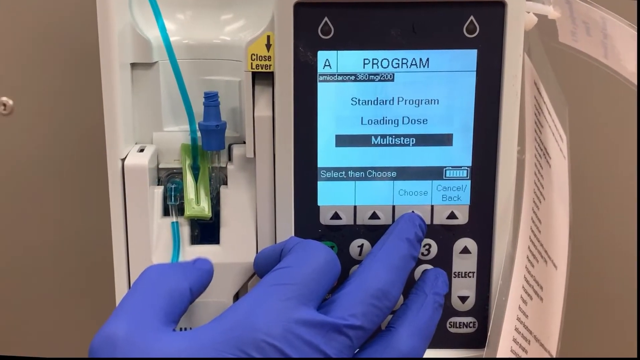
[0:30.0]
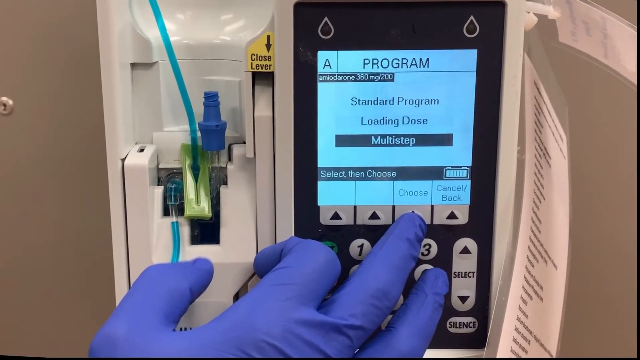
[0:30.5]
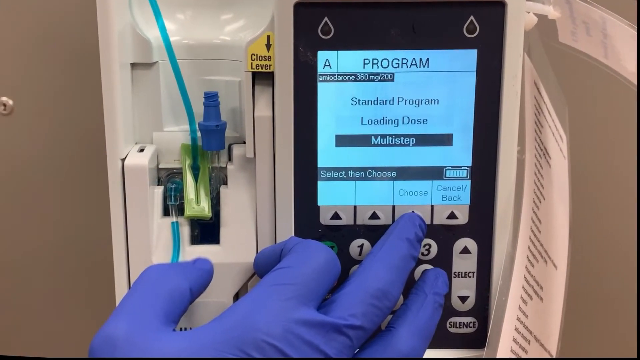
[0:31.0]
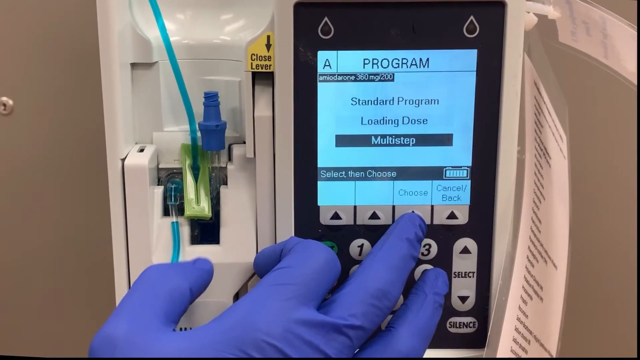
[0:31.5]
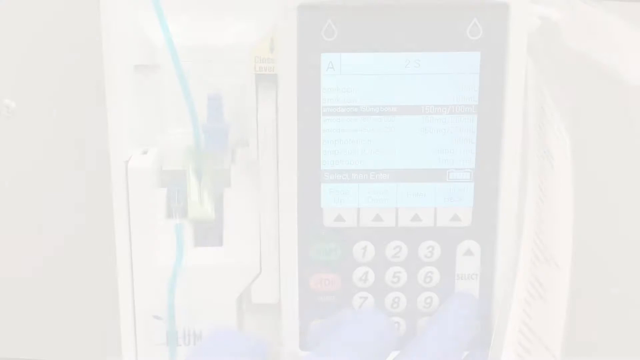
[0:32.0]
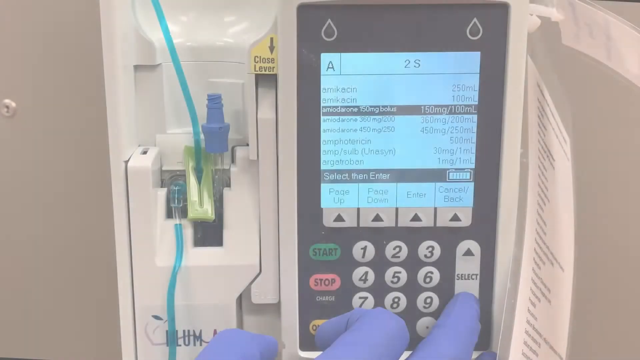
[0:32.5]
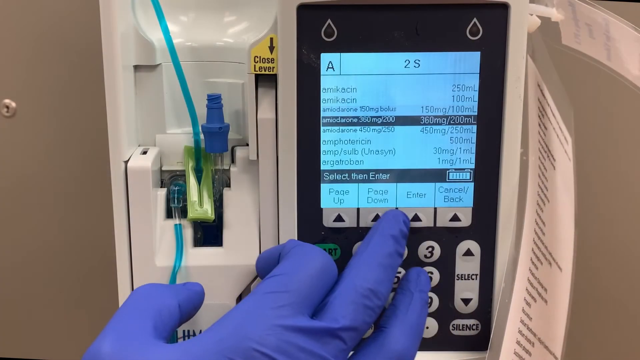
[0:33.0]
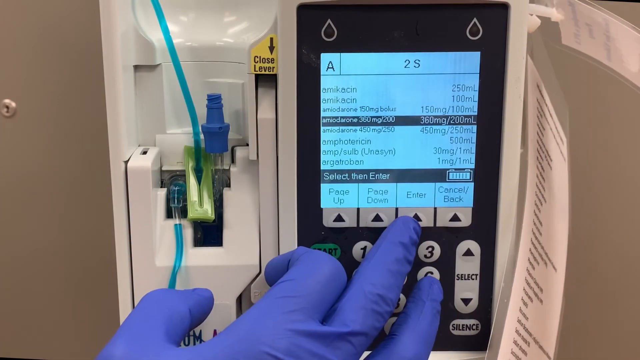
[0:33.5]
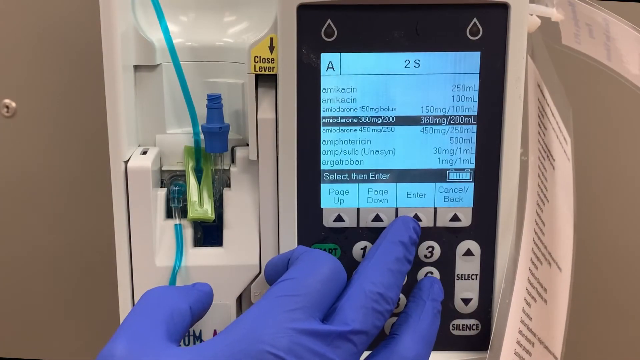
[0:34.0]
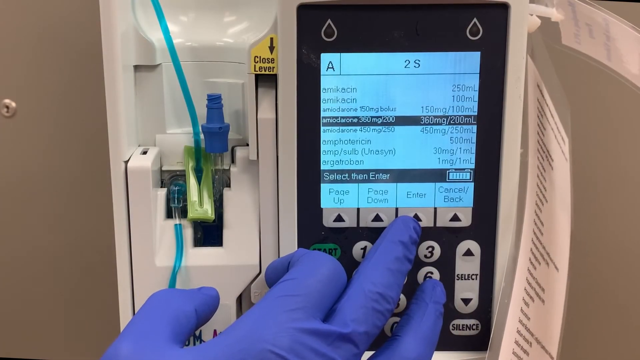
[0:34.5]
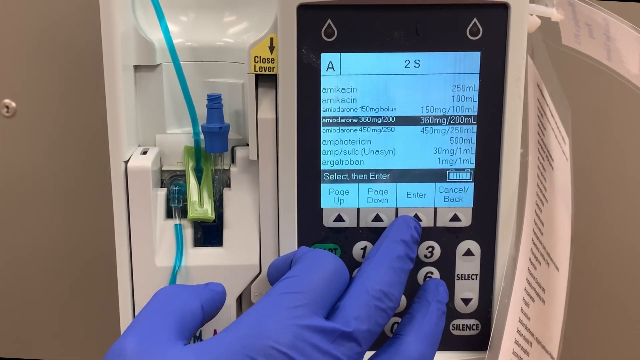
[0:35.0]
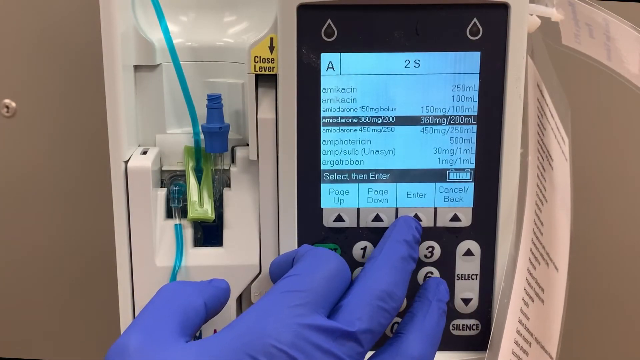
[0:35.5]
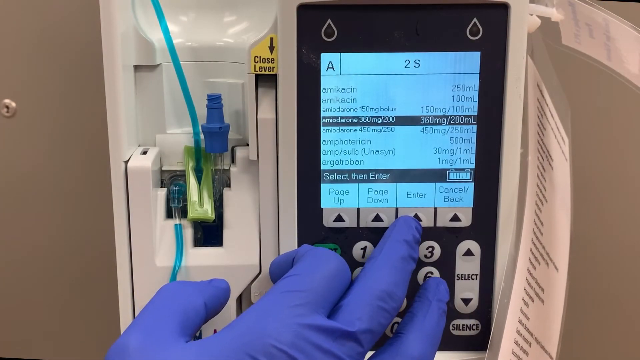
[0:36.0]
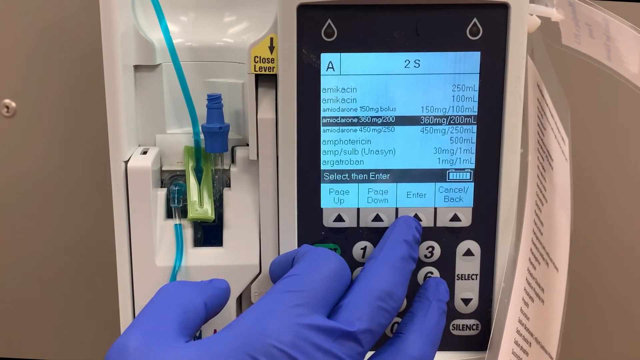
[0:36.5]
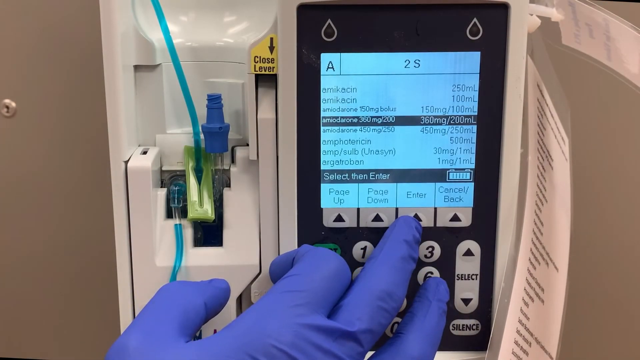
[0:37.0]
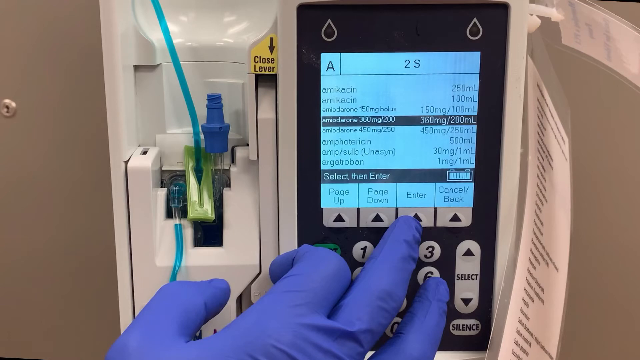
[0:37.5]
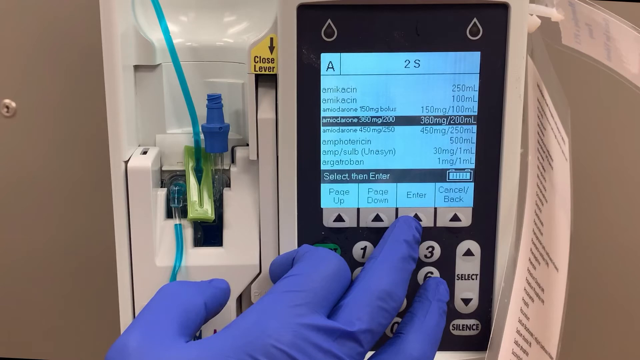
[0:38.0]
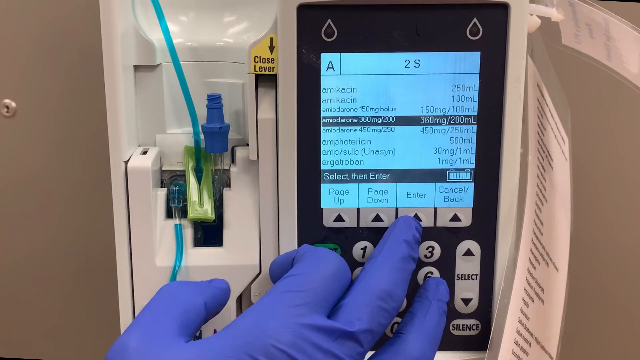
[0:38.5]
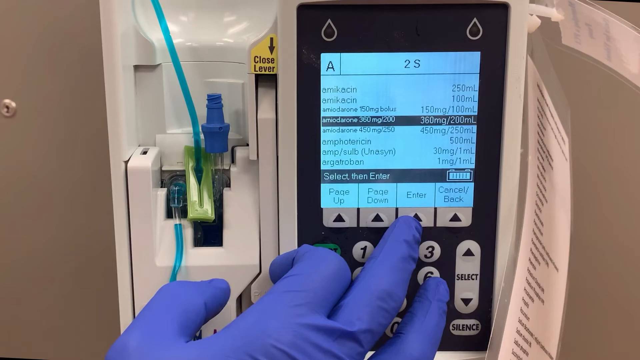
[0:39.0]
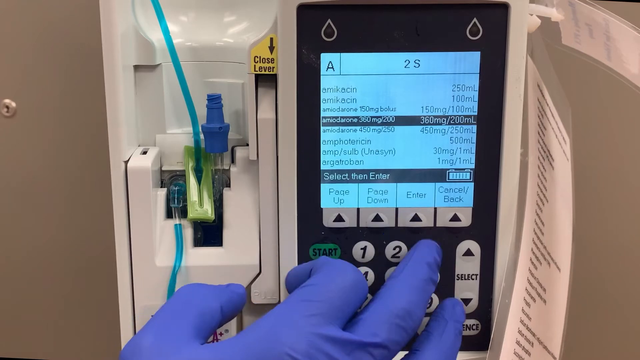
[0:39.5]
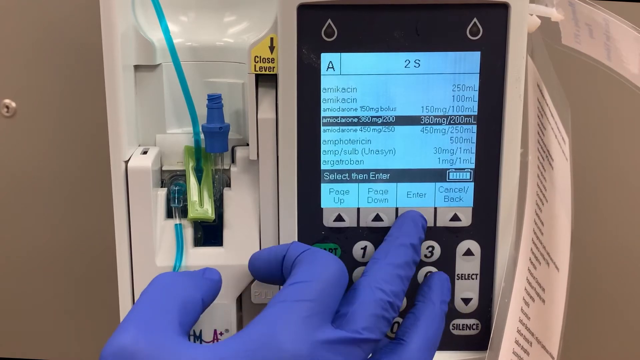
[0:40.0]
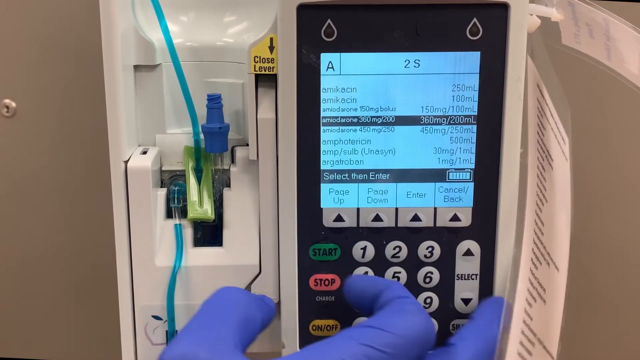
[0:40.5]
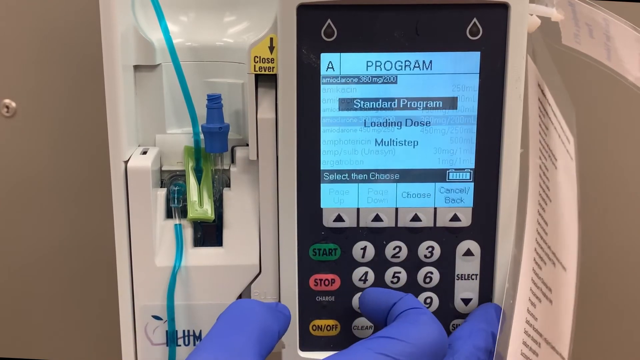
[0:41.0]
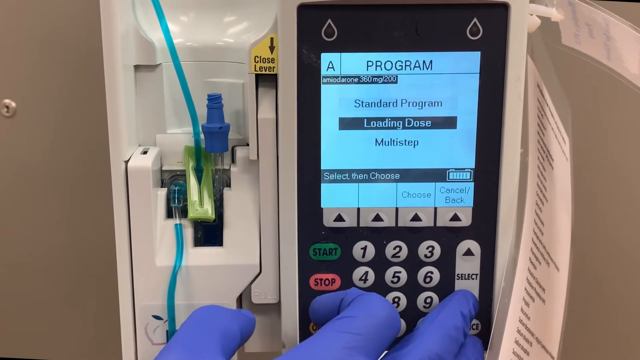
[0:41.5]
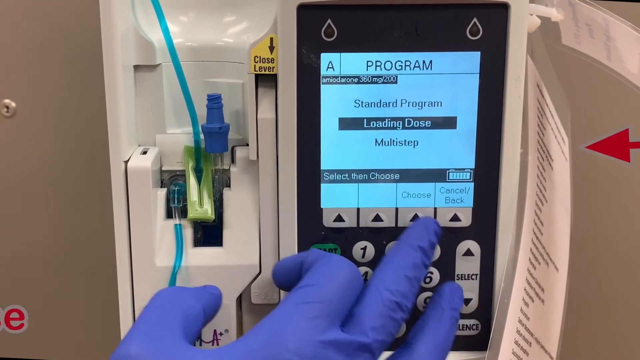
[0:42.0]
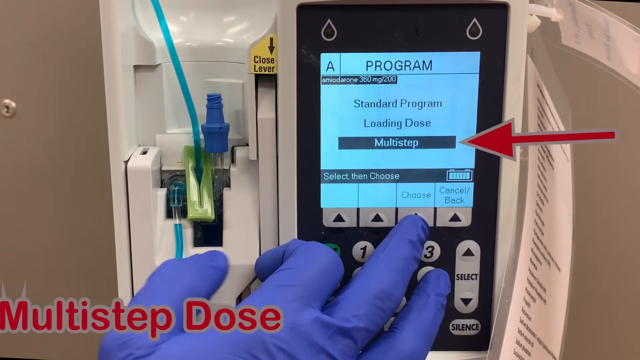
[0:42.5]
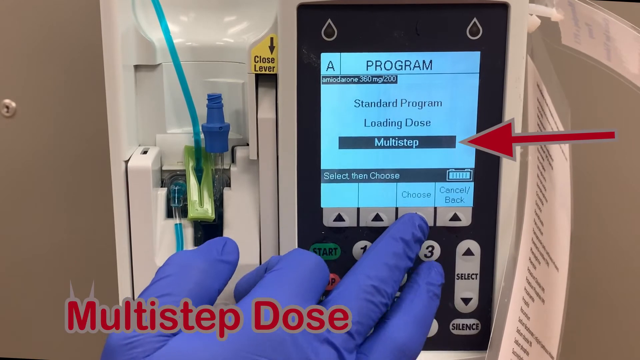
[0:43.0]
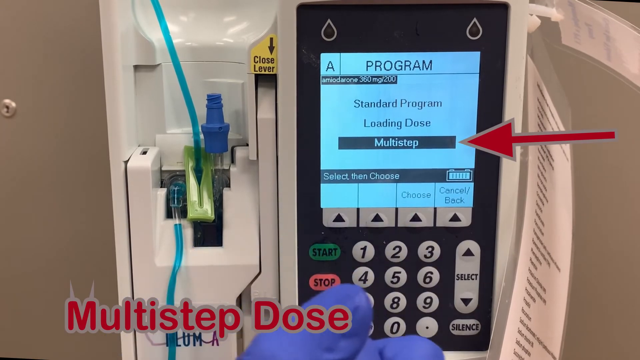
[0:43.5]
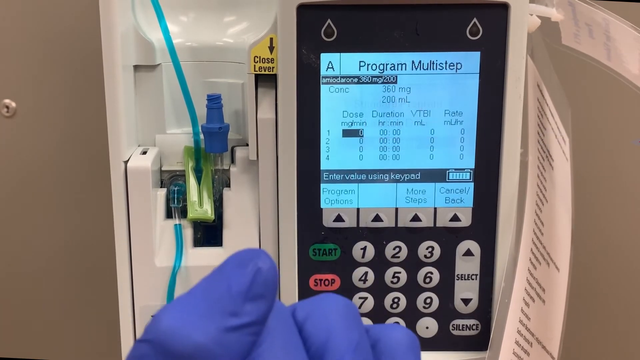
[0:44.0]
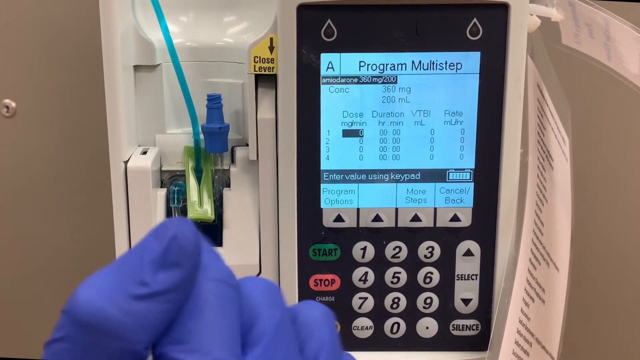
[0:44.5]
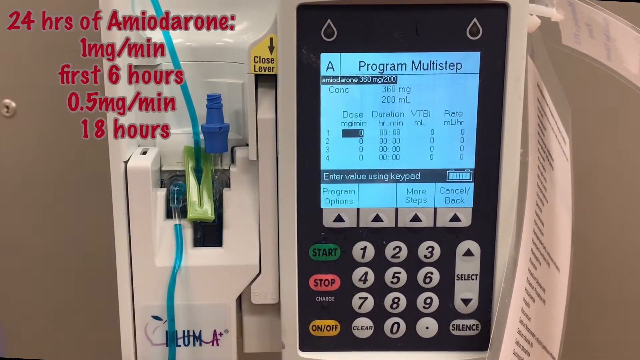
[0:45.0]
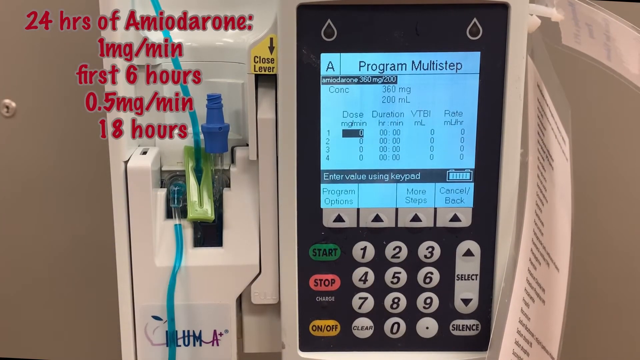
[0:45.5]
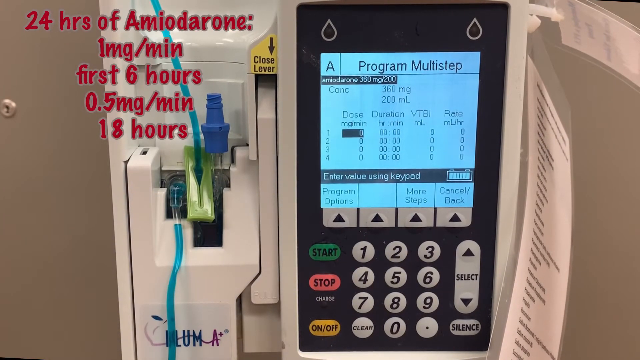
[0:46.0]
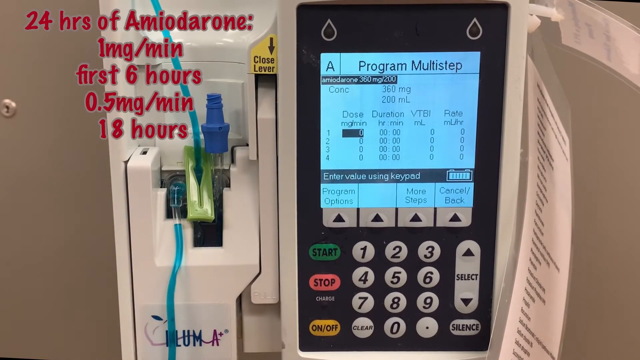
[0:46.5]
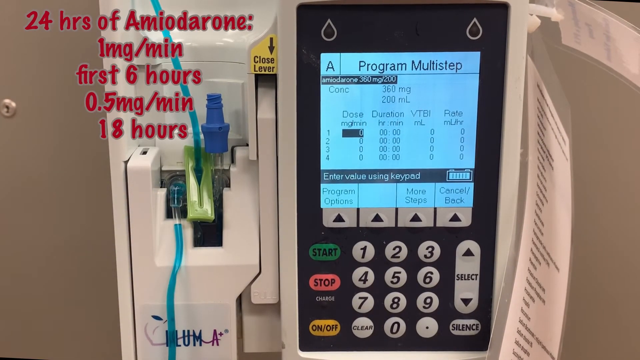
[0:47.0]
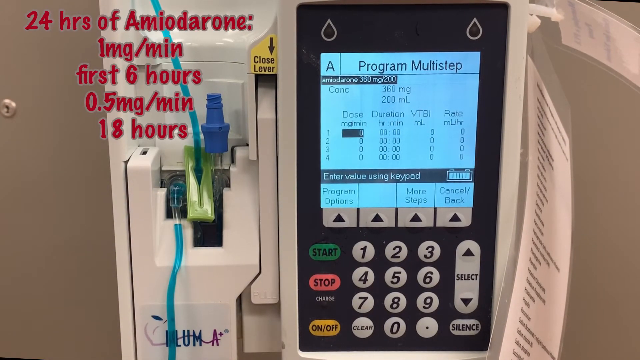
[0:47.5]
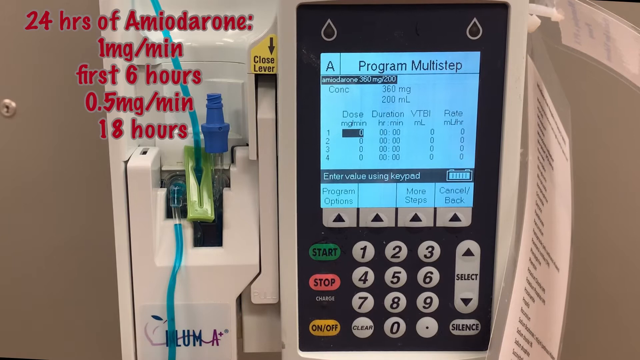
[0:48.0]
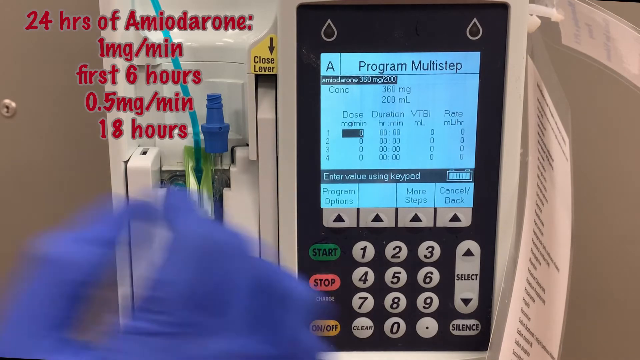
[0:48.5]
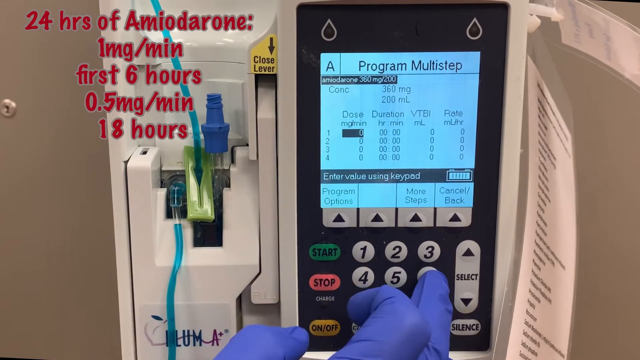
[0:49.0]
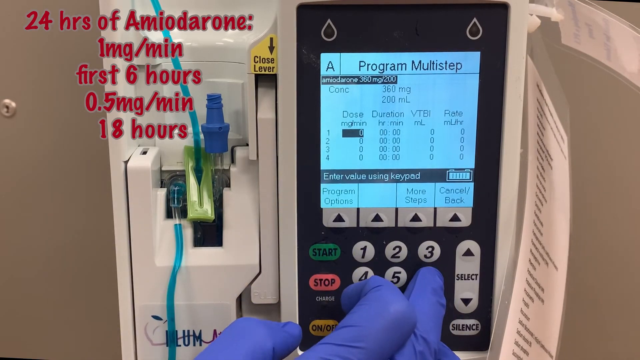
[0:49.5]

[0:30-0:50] The professional sets up a specific drug. The standard programs are shown first, apparently a collection of different drugs, including amitadarone, in a menu listing drugs with different volumes and different concentrations. Under the standard program, the medical professional selects amitodarone 360mg per 200mg and then moves down to the multi-step option under the second menu. Red text overlaid on the image shows the treatment plan: 24 hours of amitodarone at a 1mg per minute rate for the first 6 hours, then a 0.5mg per minute rate for 18 hours. The medical professional goes to the multi-step set program and selects the first spot to enter this information.